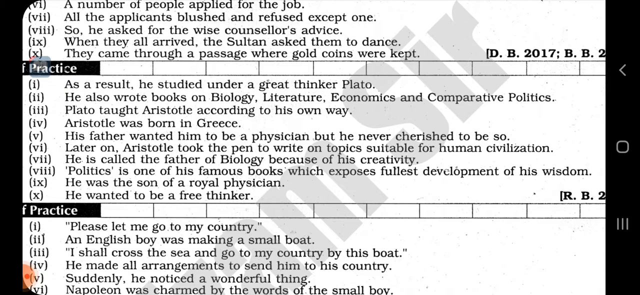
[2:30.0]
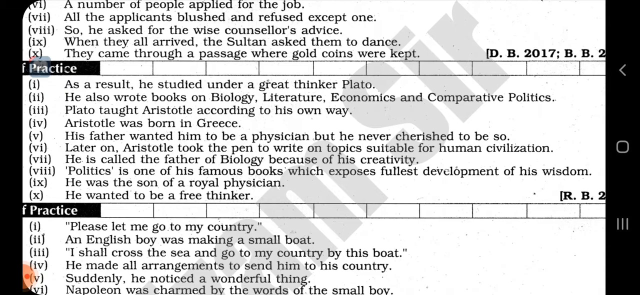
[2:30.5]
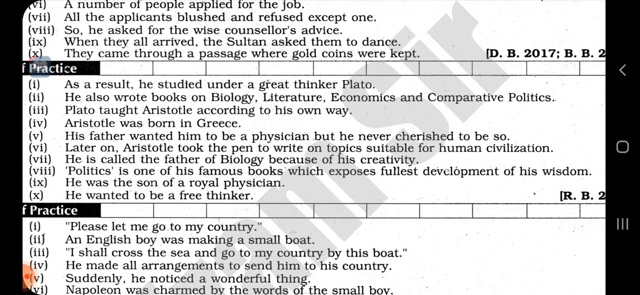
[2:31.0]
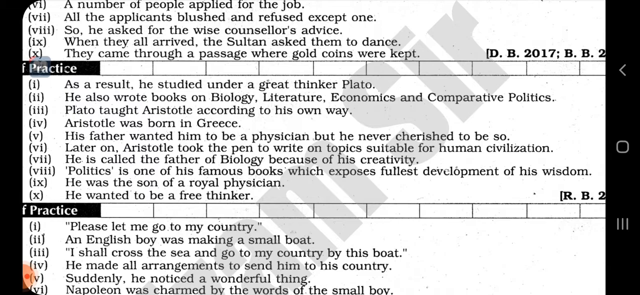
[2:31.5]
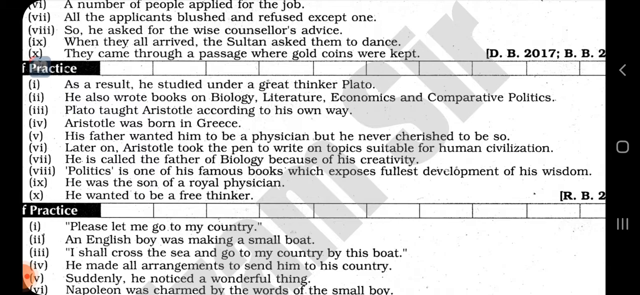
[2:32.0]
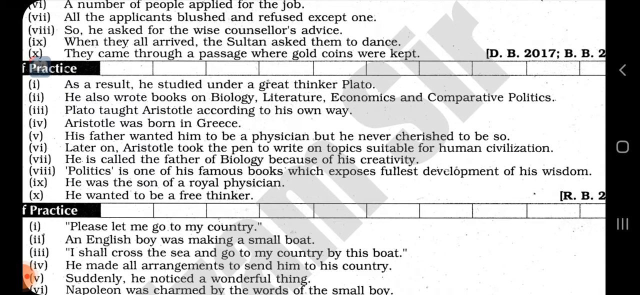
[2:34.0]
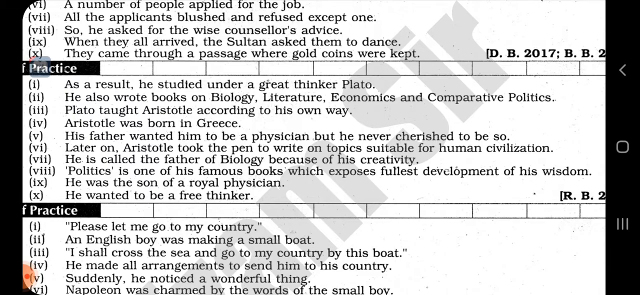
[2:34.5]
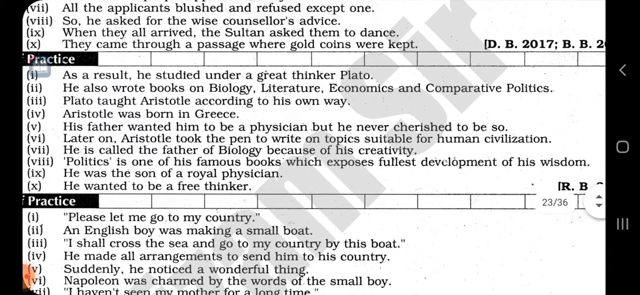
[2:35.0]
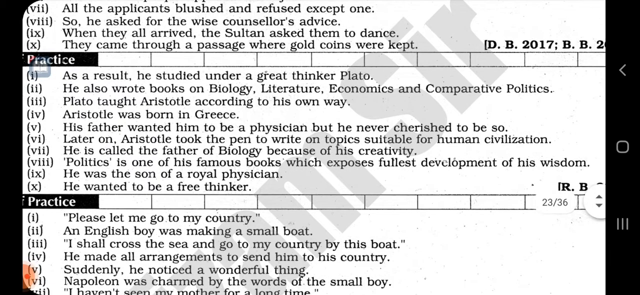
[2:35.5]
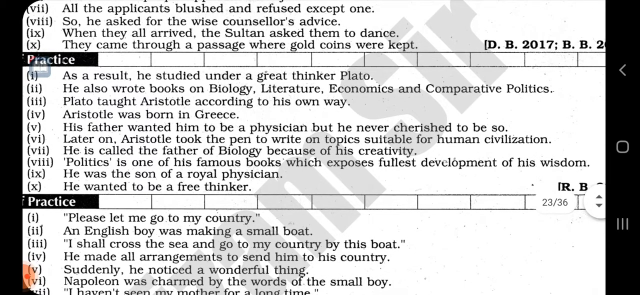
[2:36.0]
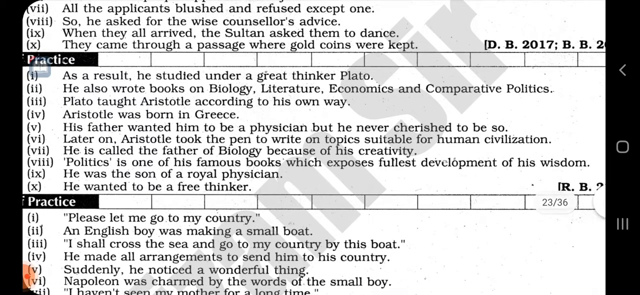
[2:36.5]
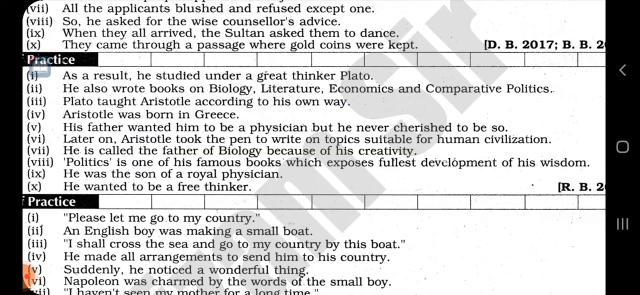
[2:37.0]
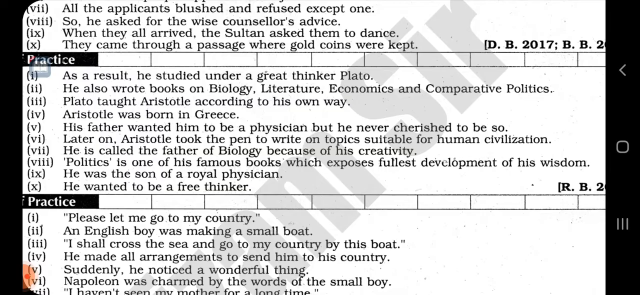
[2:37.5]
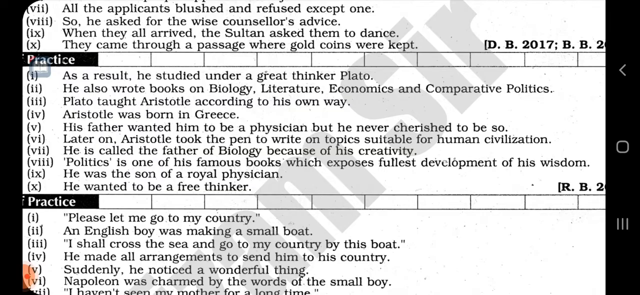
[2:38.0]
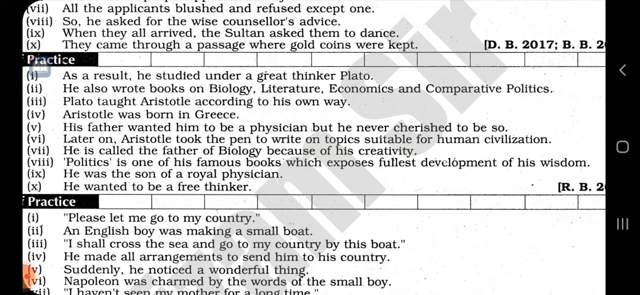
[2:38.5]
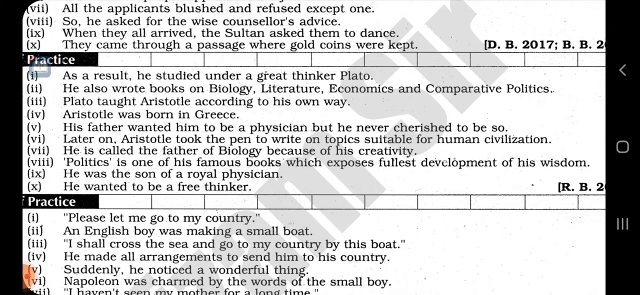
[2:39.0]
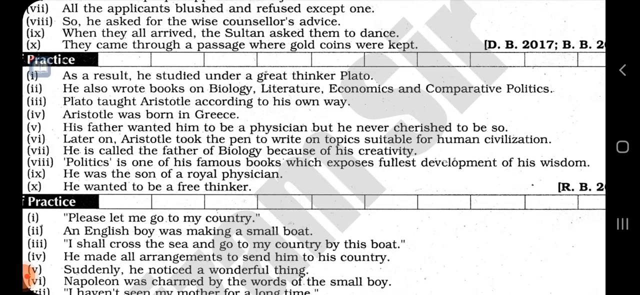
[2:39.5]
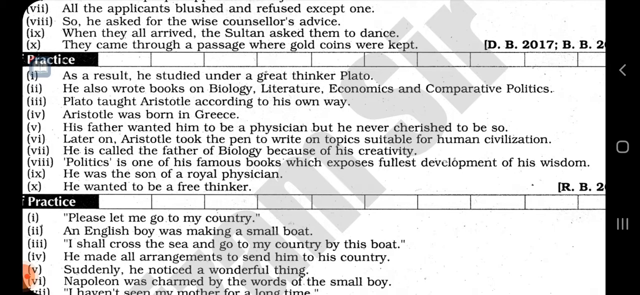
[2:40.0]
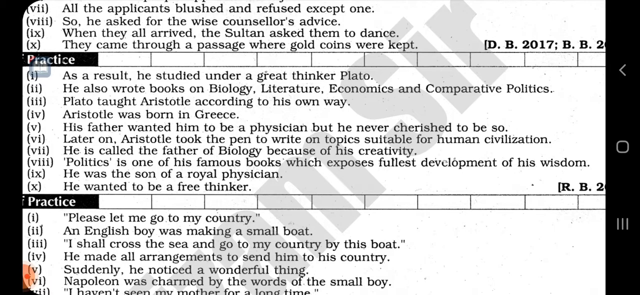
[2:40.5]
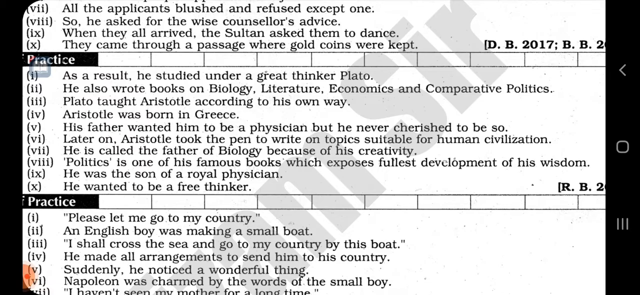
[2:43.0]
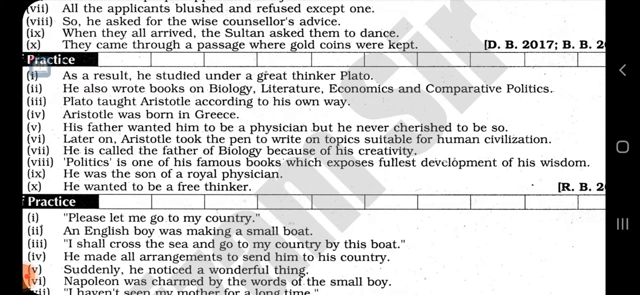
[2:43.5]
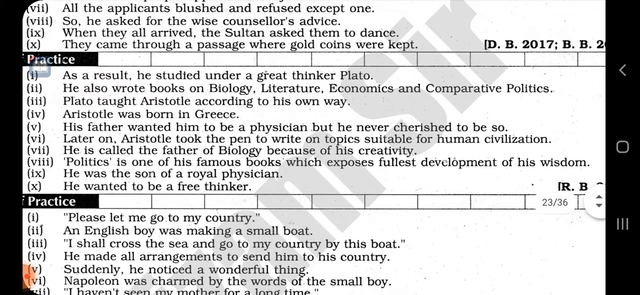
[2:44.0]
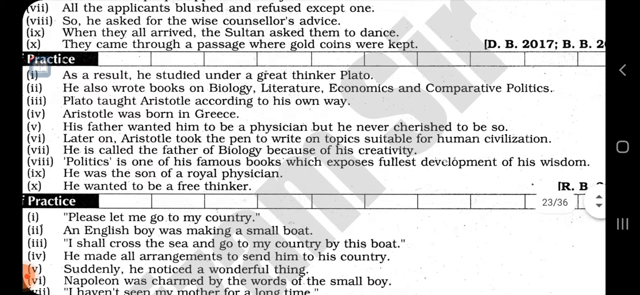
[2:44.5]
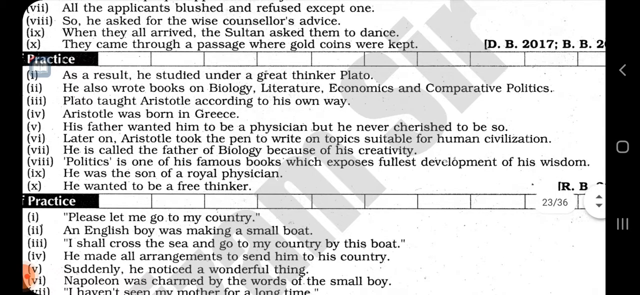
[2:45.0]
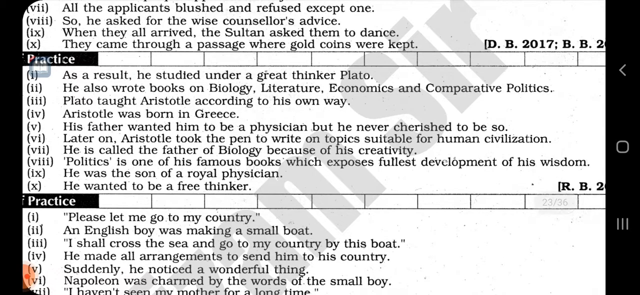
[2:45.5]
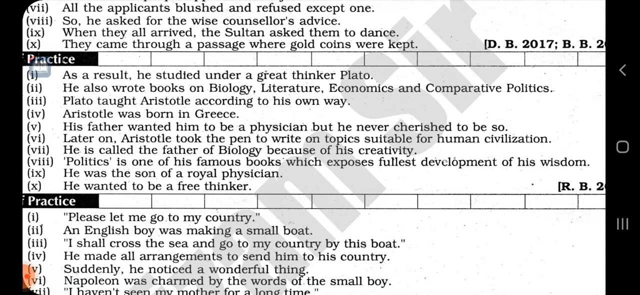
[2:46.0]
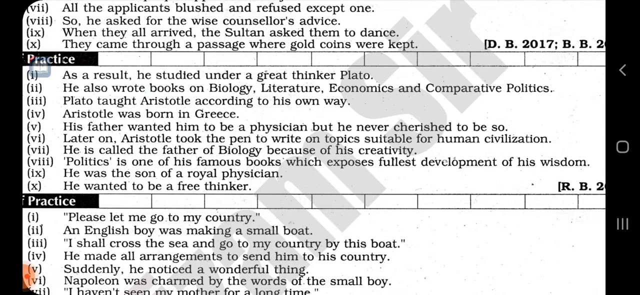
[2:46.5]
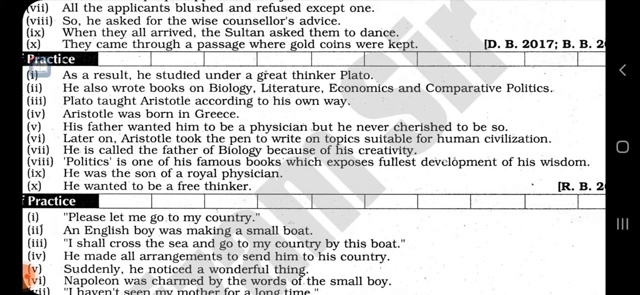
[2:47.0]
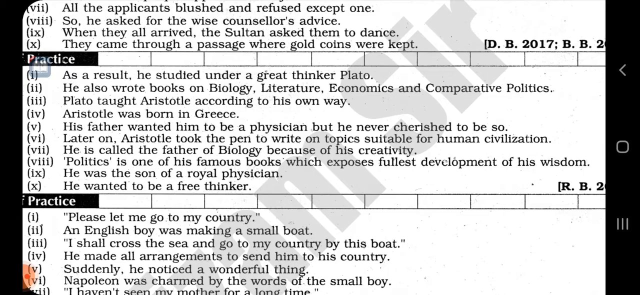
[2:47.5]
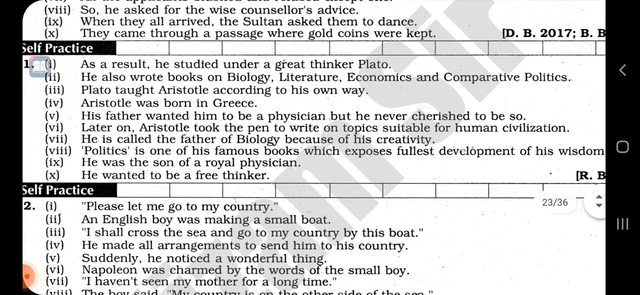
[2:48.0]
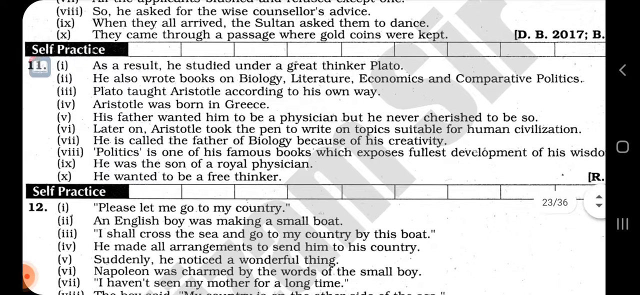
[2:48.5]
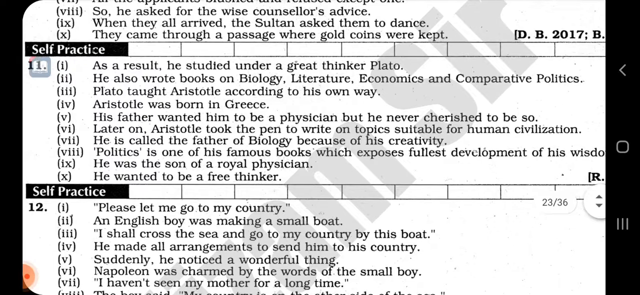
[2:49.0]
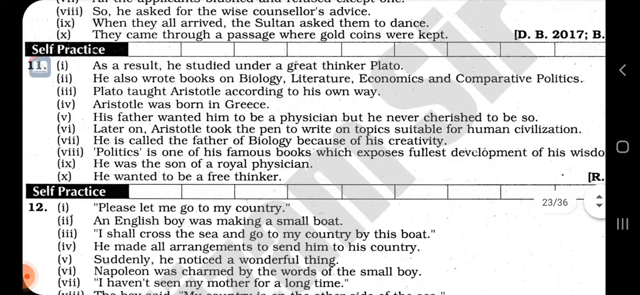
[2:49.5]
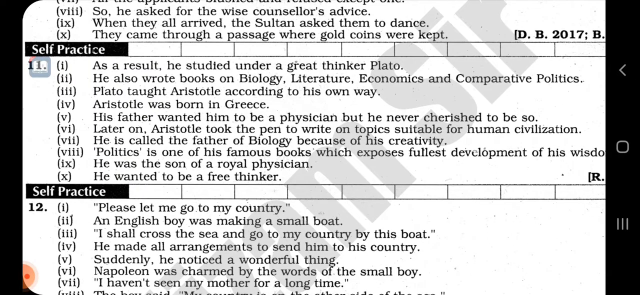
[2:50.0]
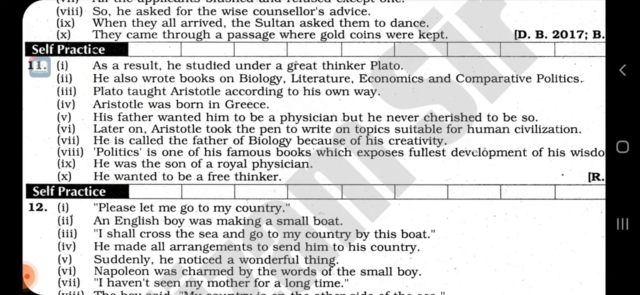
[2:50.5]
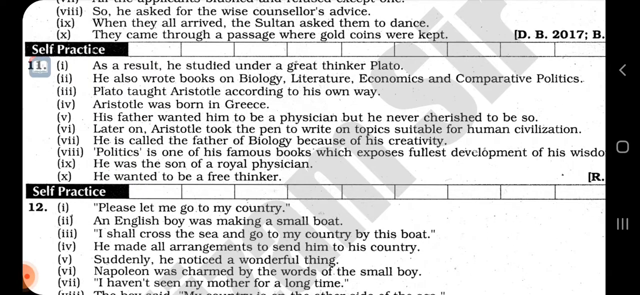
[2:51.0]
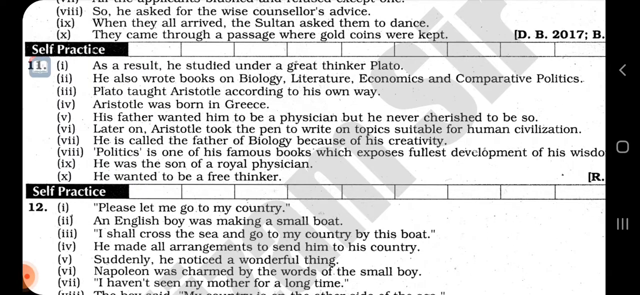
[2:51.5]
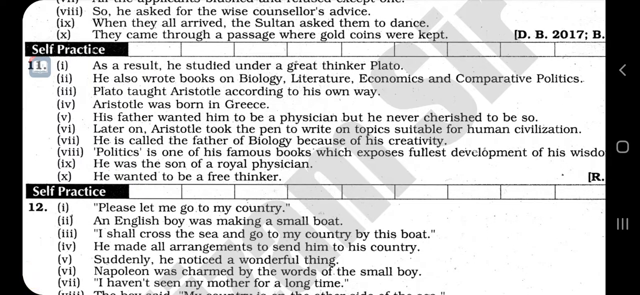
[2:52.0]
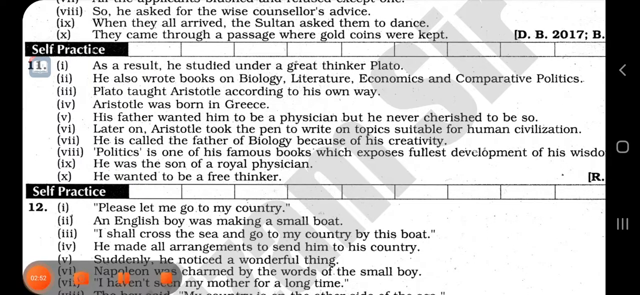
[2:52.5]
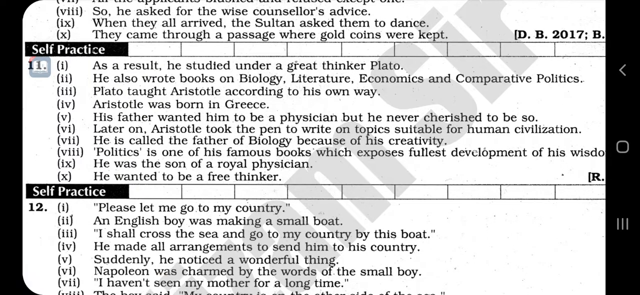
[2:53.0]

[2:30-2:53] The same 10 options remain on screen. Across the three questions there are about 20 options: four for the top question, 10 for question 11, and six for question 12. The screen is readjusted slightly once again to emphasize the middle passage. Each passage seems to deal with a different time or region of history: the first involves Sultans, the second focuses on Greece, Aristotle and Plato, and the third is about Napoleon and Englishmen. Each passage seems centered on one or two important figures and, perhaps, their stories.